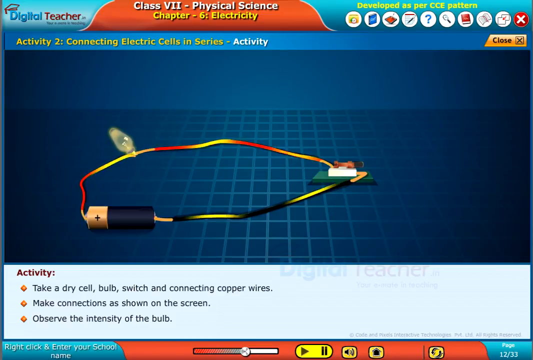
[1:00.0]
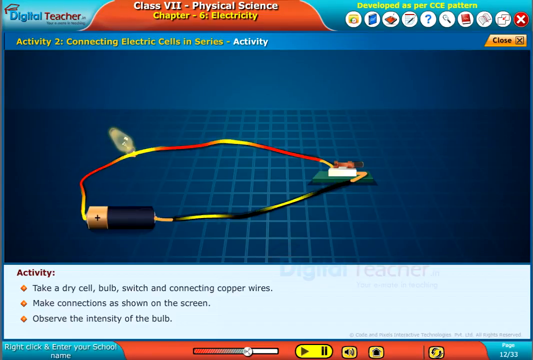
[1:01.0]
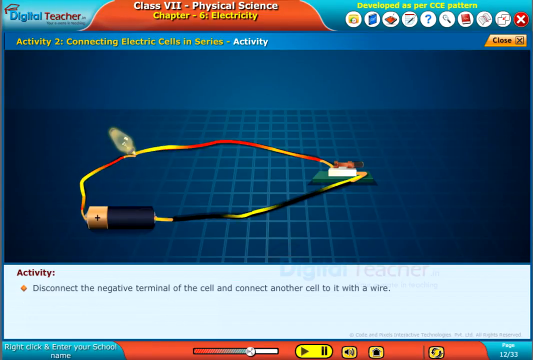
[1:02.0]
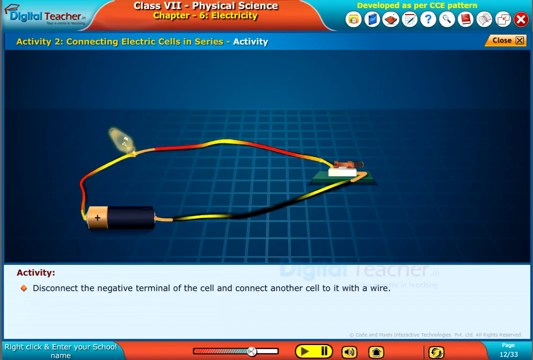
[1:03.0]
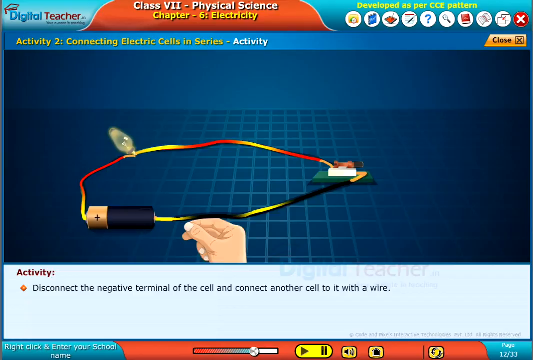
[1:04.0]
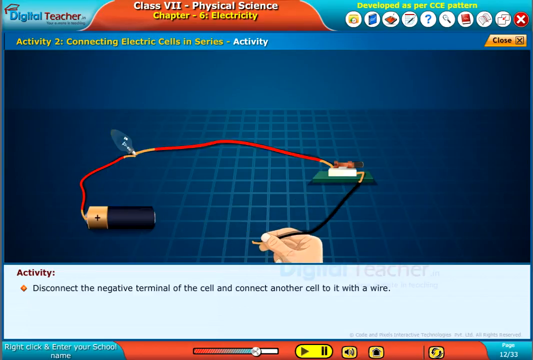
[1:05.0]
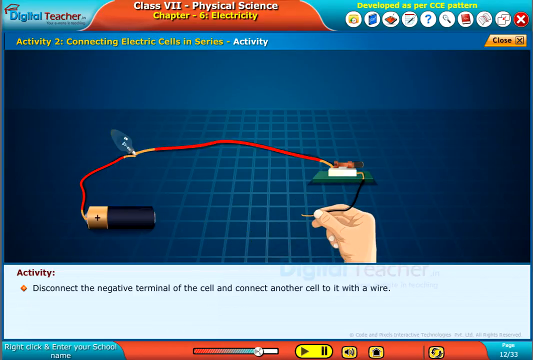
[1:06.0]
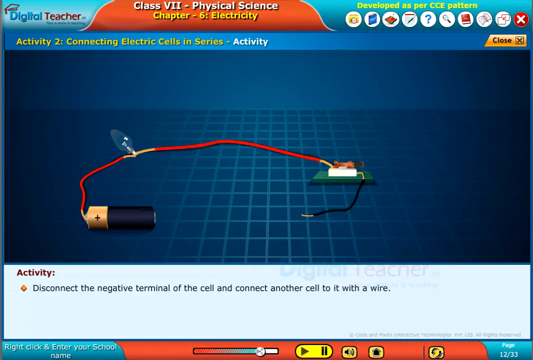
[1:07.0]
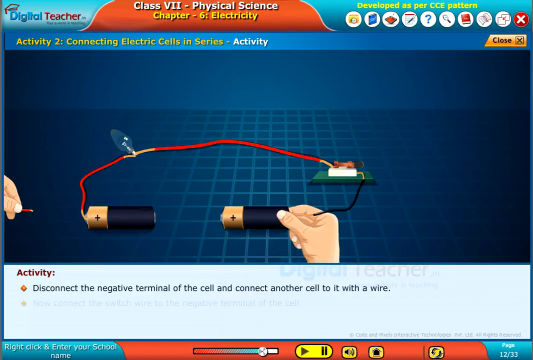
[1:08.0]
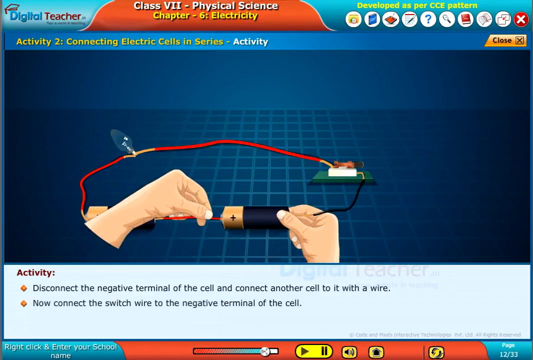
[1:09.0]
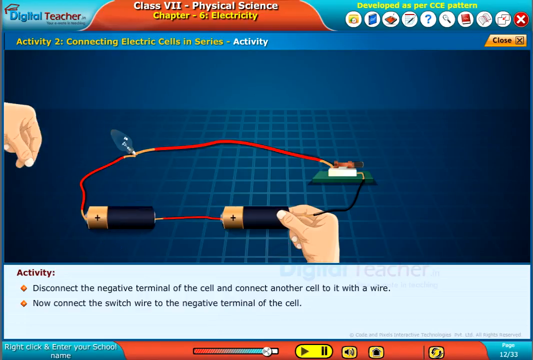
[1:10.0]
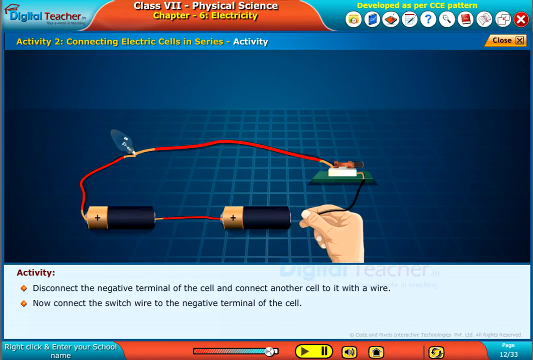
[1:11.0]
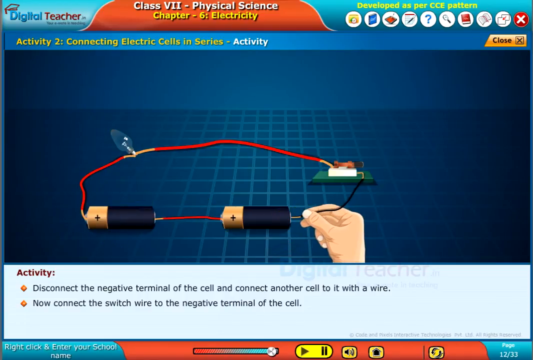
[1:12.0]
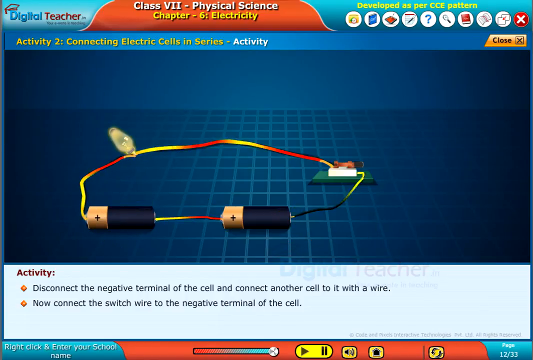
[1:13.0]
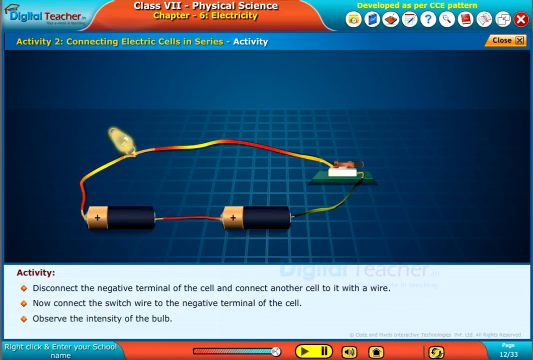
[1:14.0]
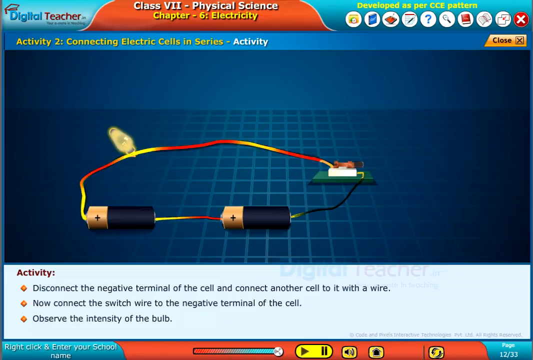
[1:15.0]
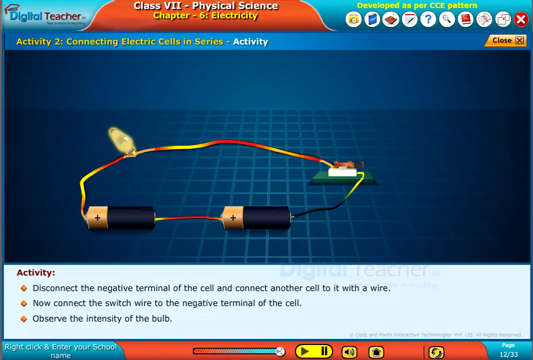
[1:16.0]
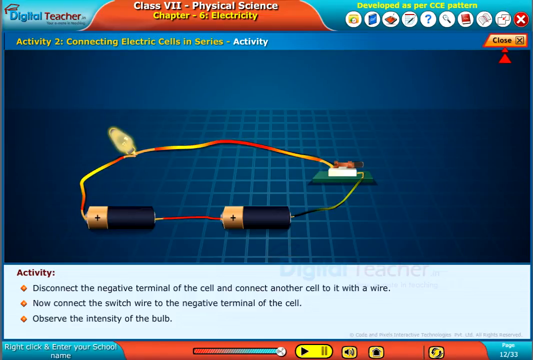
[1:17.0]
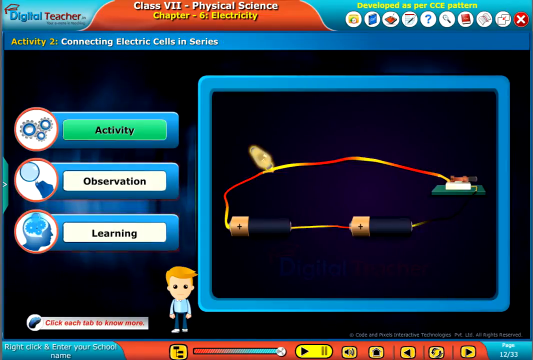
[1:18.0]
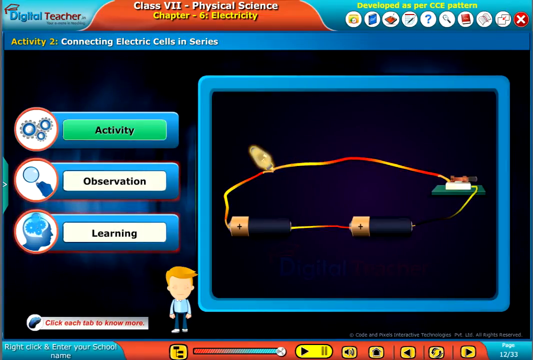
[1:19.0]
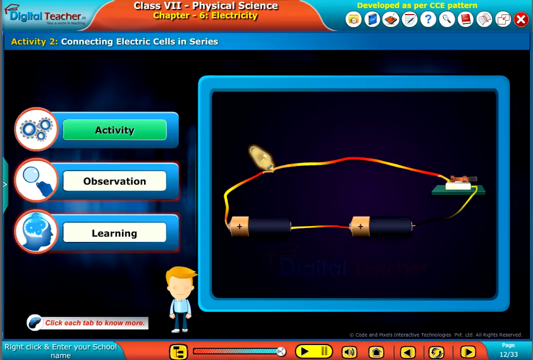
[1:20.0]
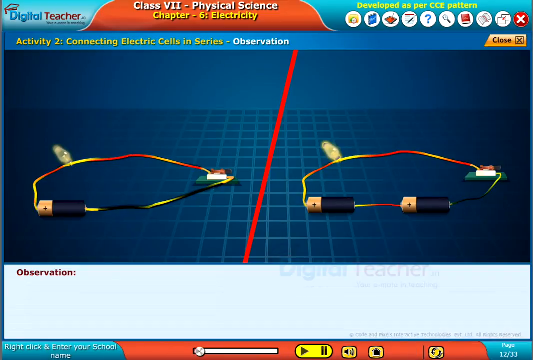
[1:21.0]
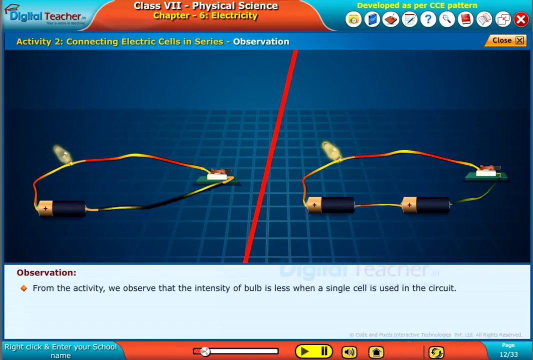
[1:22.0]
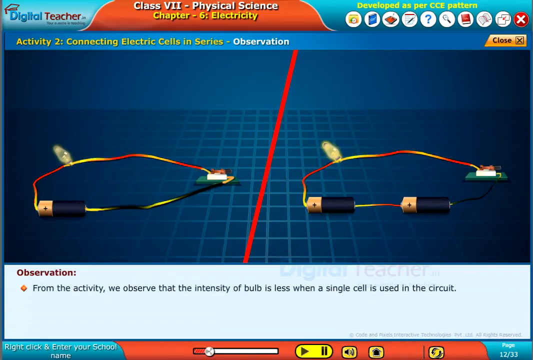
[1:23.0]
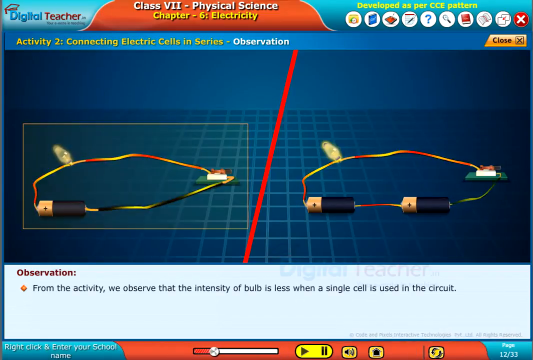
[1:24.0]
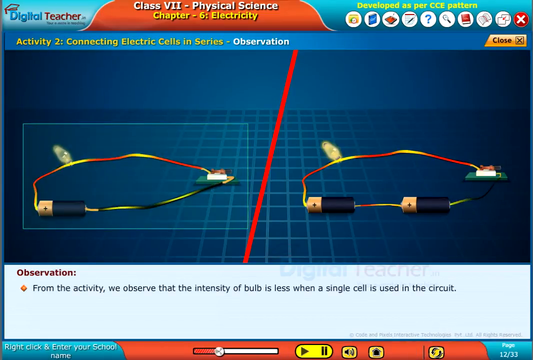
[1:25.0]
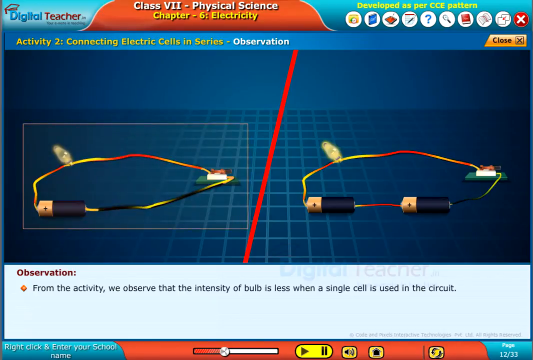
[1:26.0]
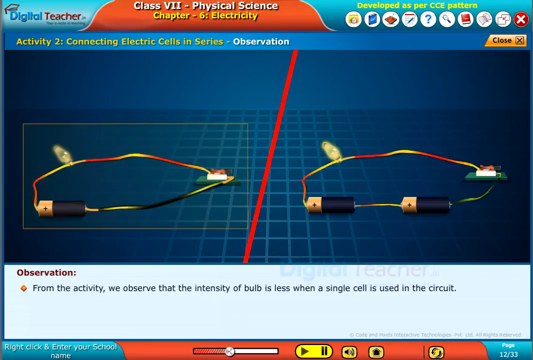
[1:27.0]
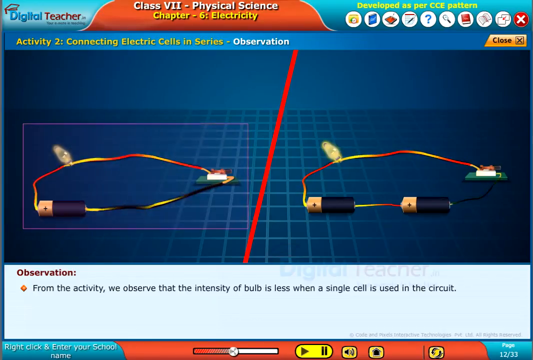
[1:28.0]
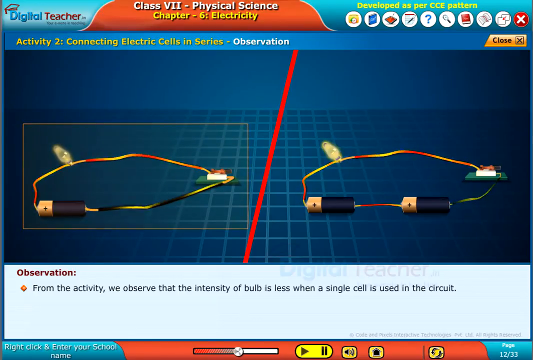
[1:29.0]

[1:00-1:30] The same screen continues, with further text beneath: "make connections as shown on the screen", followed by instructions to disconnect the negative terminal of the cell and connect another cell. The hand takes off the first wire from the negative of the battery, connects it to the negative of another battery, and an additional wire connects the two. Electricity is shown flowing around the circuit. The screen then switches to one divided diagonally by a red divider, showing two versions side by side, one with one battery and one with two batteries. The one with one battery, on the left, is highlighted. At the bottom, "observation" appears in red, with a bullet beneath it beginning "from the activity, we observe the intensity of the bulb" and ending "is less when a single cell is used in the circuit". The light bulb is brighter on the left diagram than on the right.